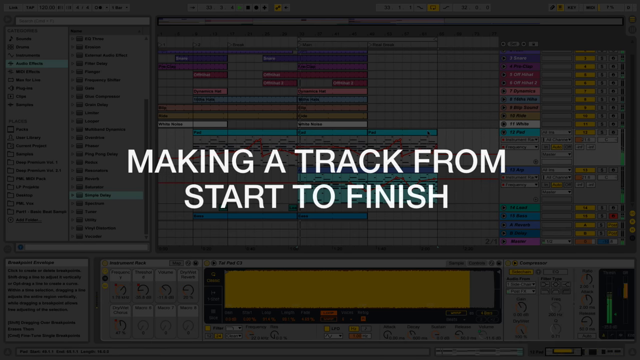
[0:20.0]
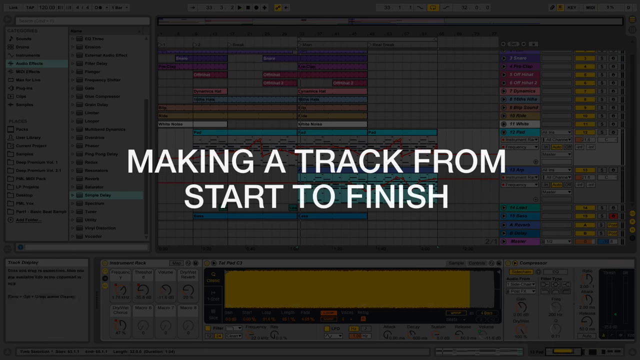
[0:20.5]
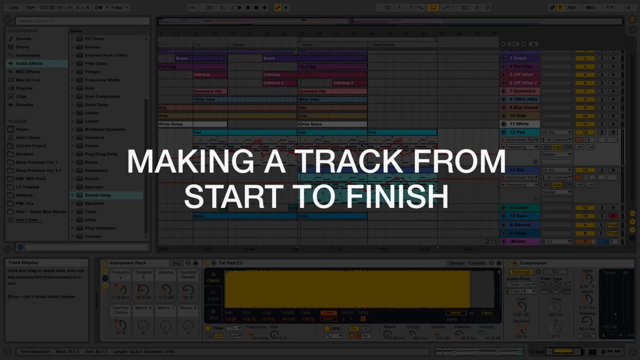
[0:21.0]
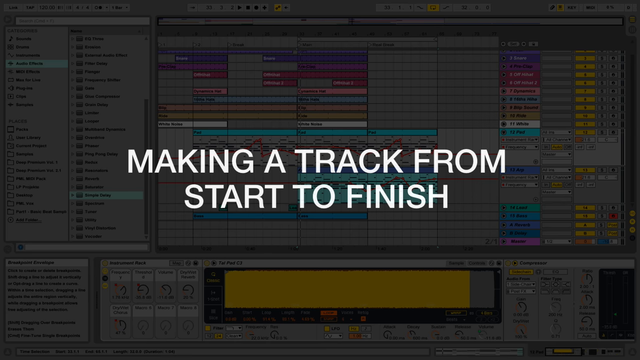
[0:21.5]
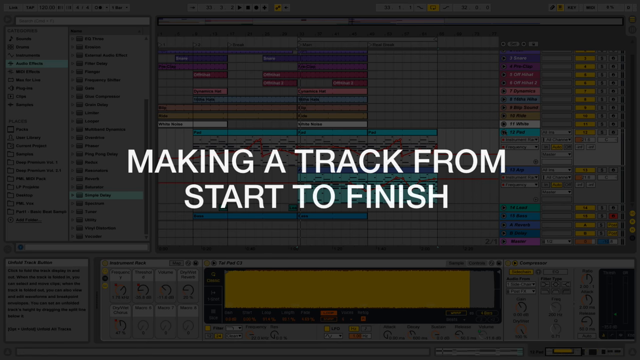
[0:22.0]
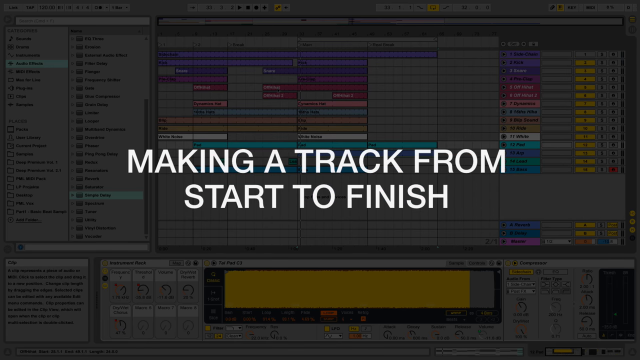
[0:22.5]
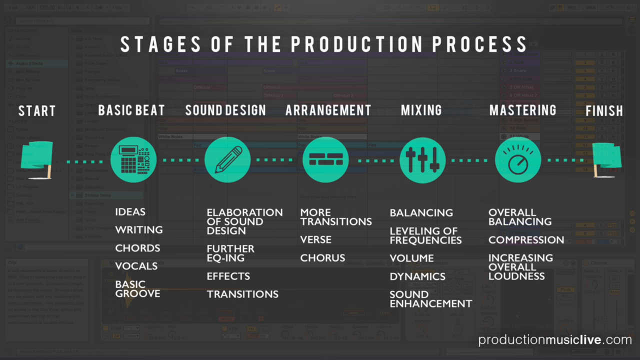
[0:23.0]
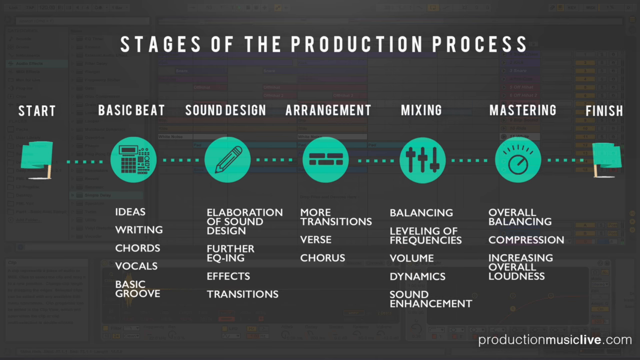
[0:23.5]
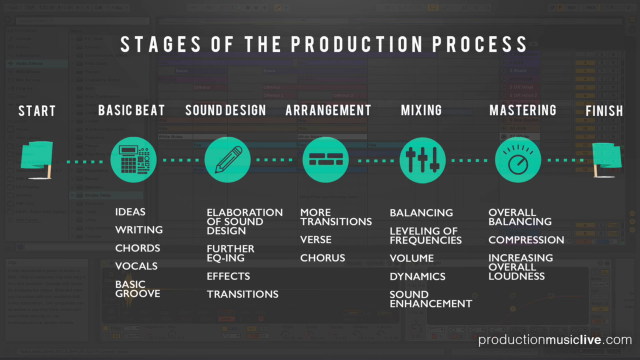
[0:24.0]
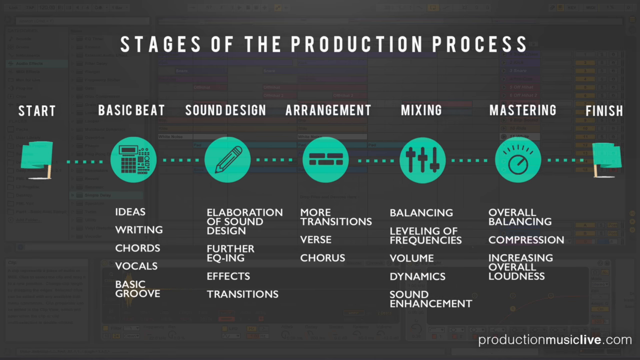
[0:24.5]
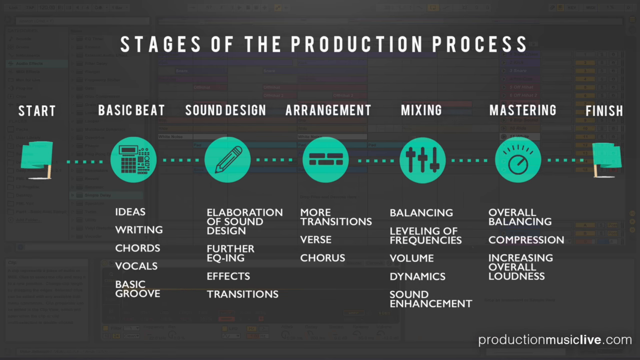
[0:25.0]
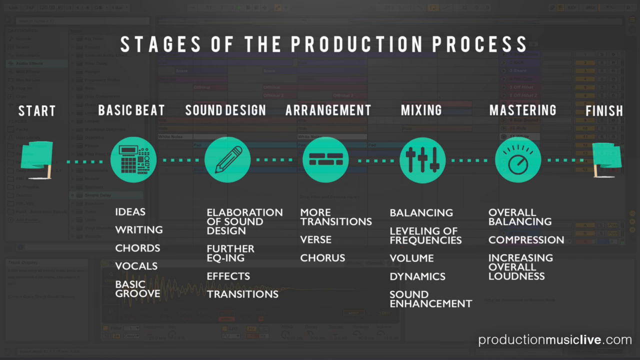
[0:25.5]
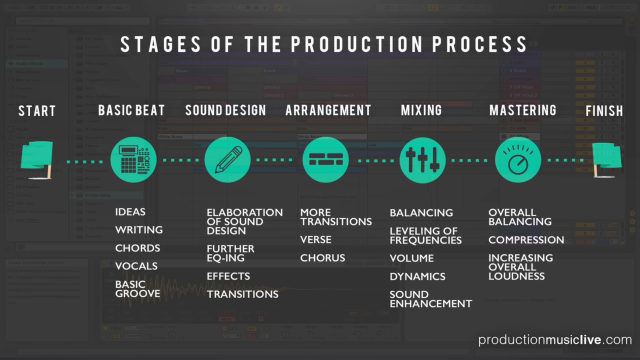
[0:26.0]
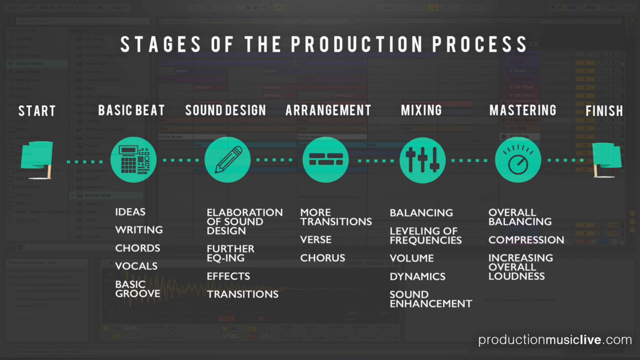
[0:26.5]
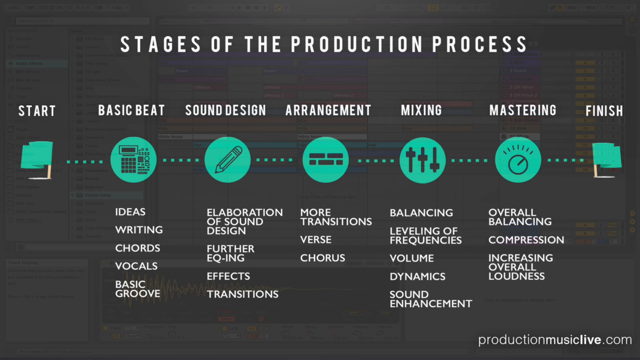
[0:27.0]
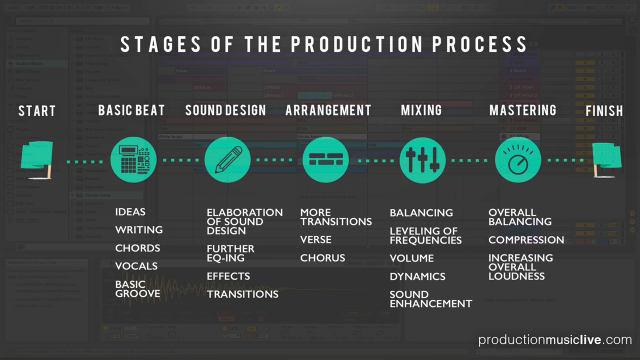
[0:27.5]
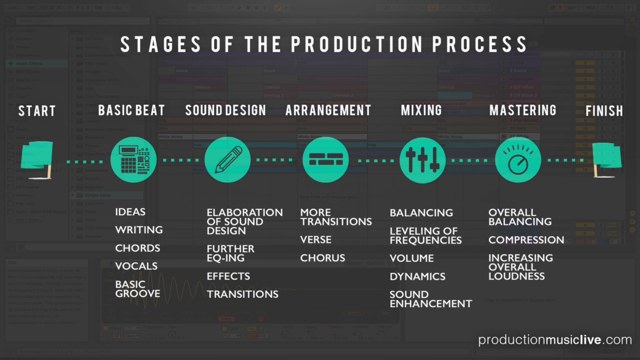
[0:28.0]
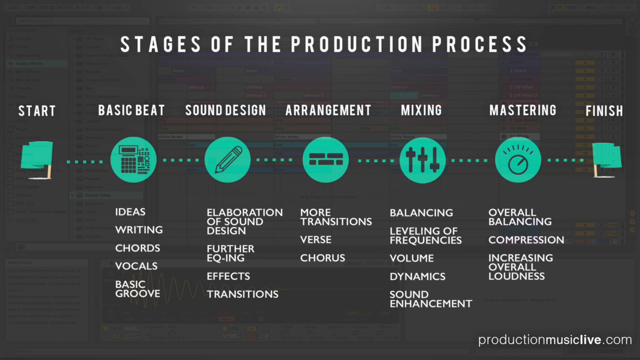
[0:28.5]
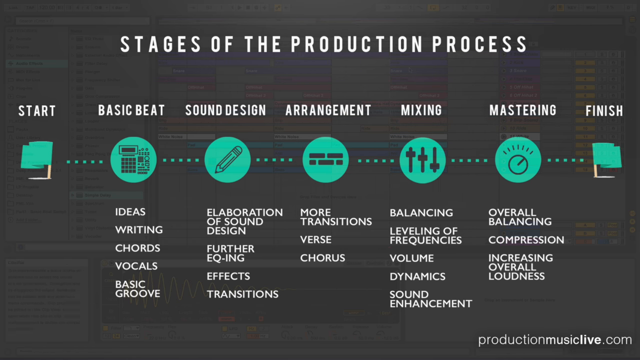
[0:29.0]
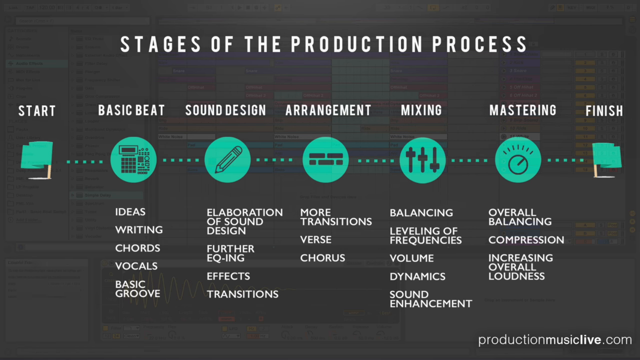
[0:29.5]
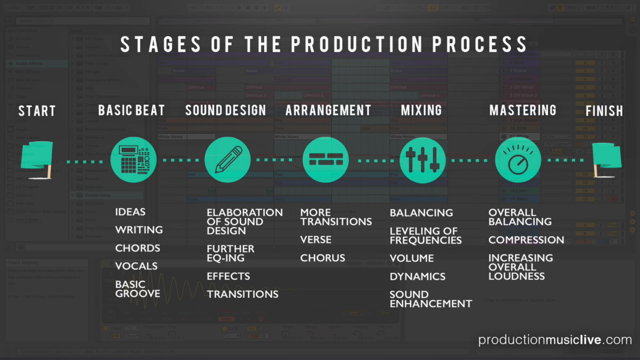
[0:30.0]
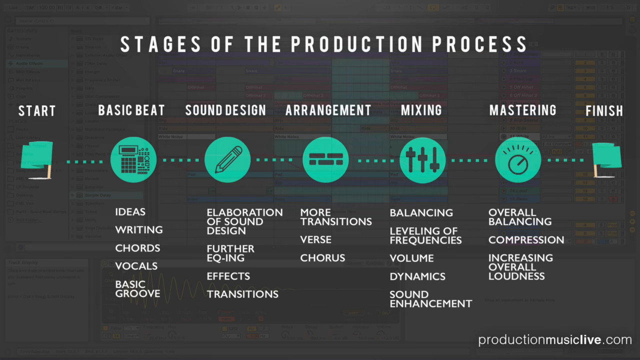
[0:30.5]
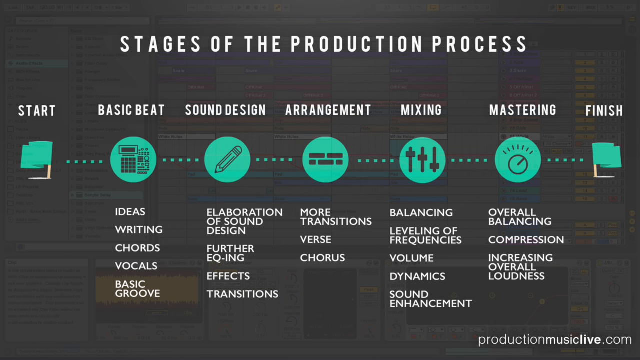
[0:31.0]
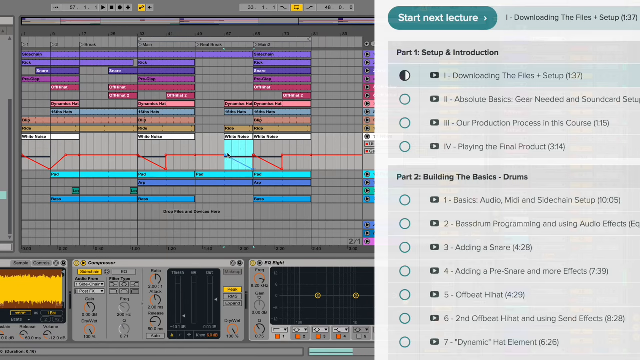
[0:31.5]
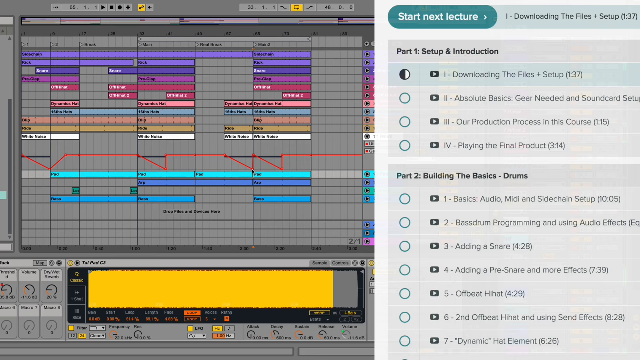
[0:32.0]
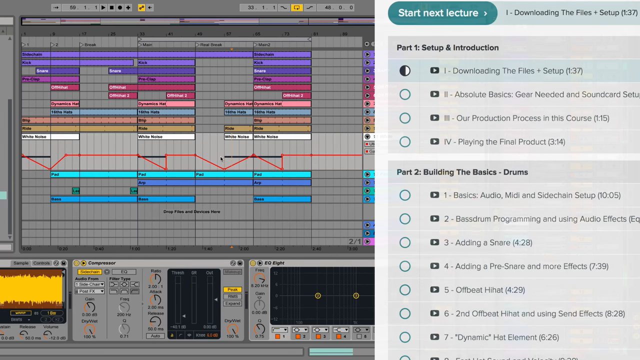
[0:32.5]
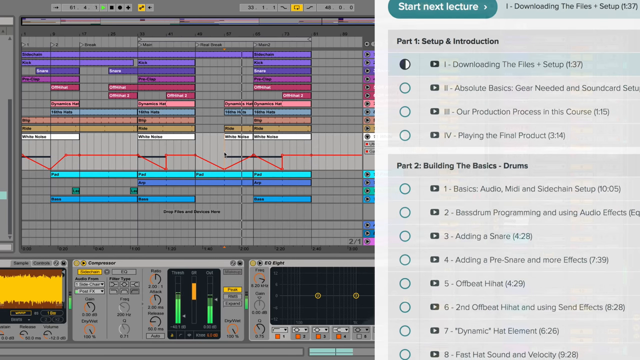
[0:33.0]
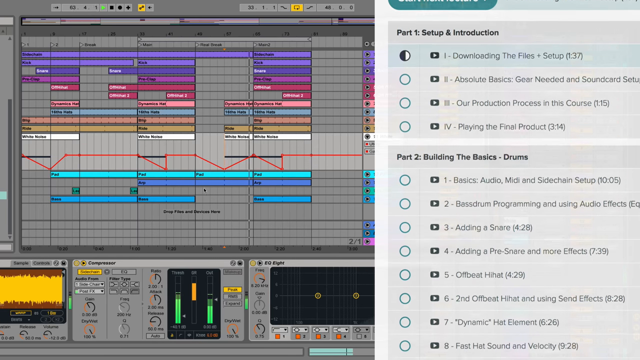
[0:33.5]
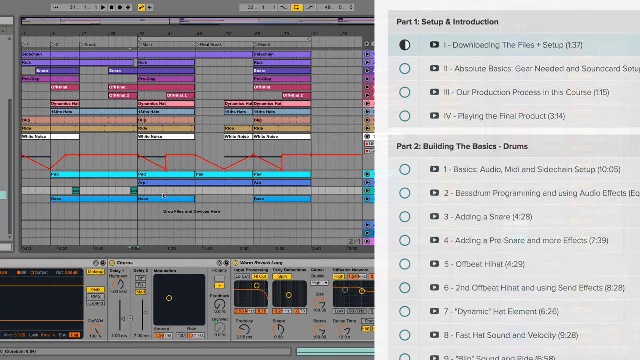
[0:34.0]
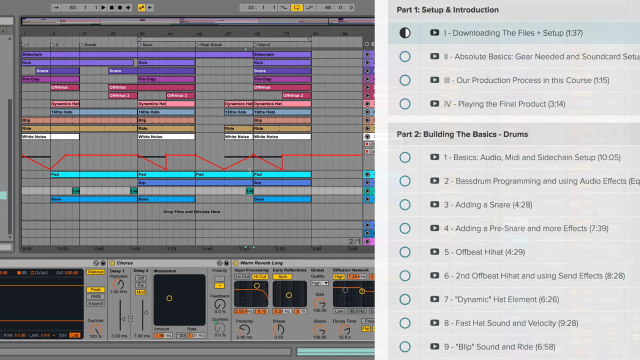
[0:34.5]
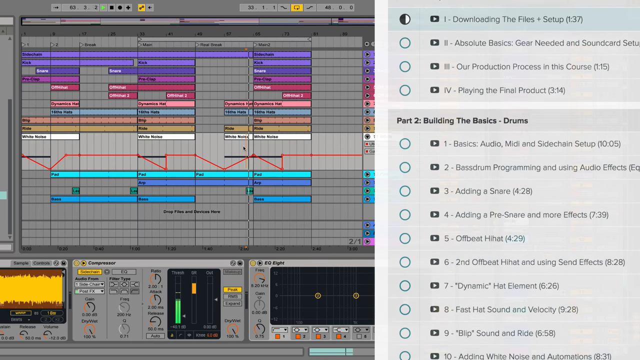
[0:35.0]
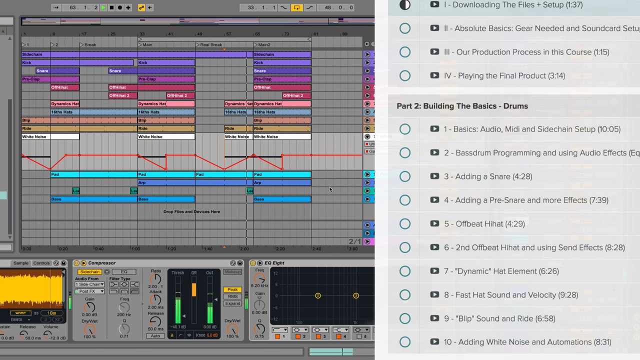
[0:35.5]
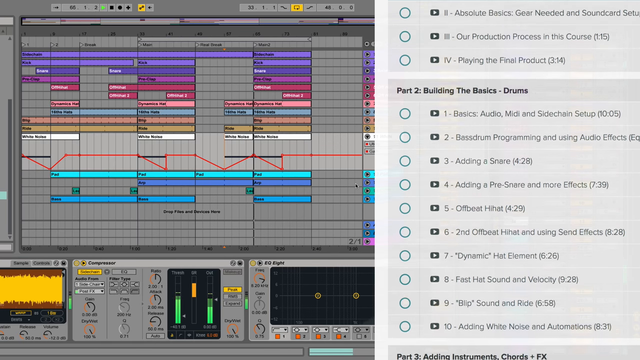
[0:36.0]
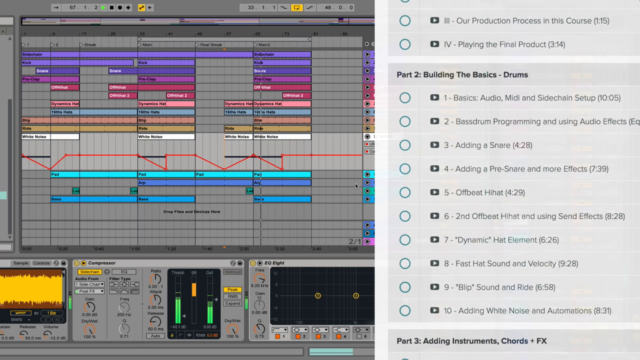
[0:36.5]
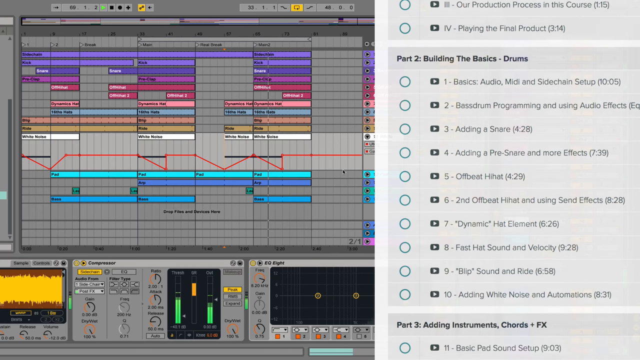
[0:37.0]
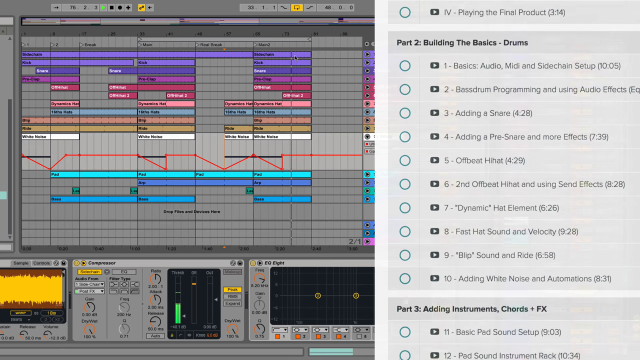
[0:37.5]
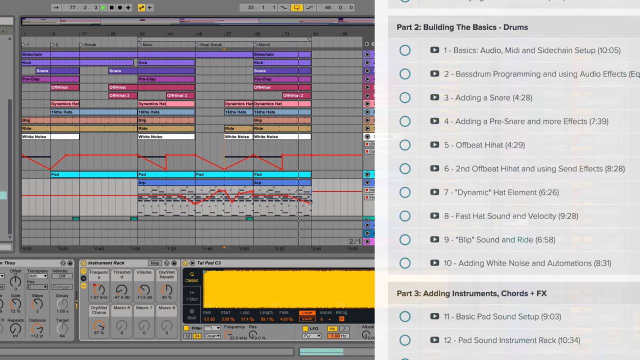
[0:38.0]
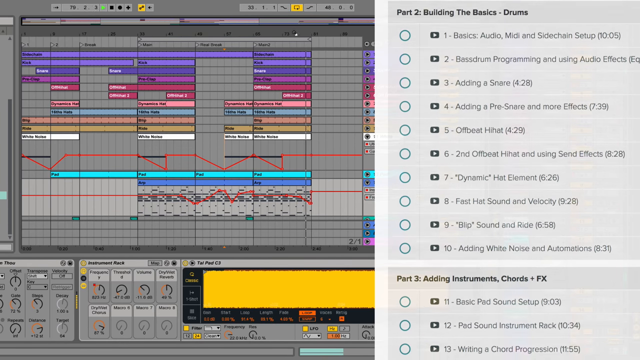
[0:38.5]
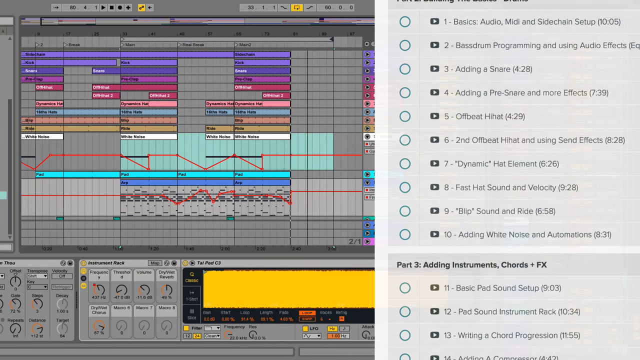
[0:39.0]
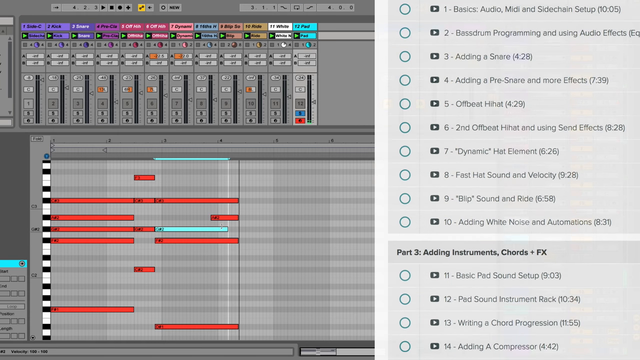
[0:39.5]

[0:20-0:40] A title reads "making a track from start to finish." It switches to a still screen reading "stages of the production process," listing in order: start, basic beat, sound design, arrangement, mixing, mastering, and finishing. From basic beat to mastering, several steps are listed under each stage, detailing what must be done. The stages are in green circles with symbols in each one. The next screen shows the right layer of the complicated interface, with color-coded bars in purple, magenta, red, salmon pink, blue, yellow, orange, white, and dark blue. Next to that is a setup page reading "part one, setup and introduction" and "part two, building the basic drums," with everything required listed there. As the page scrolls up, more is added.